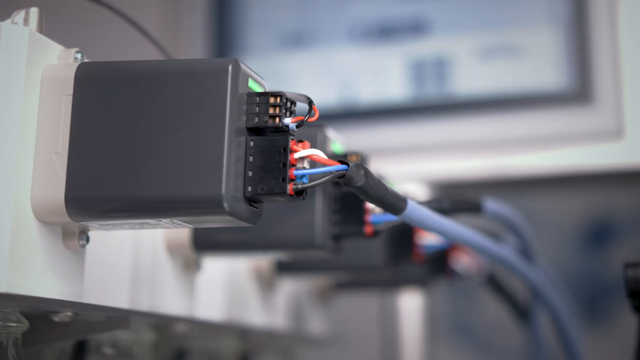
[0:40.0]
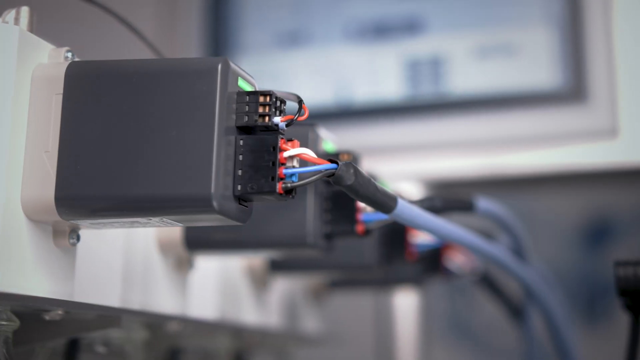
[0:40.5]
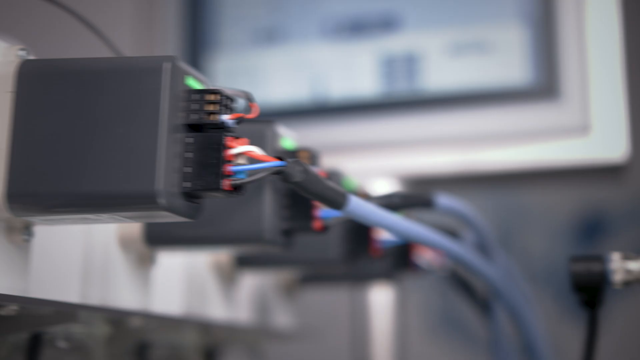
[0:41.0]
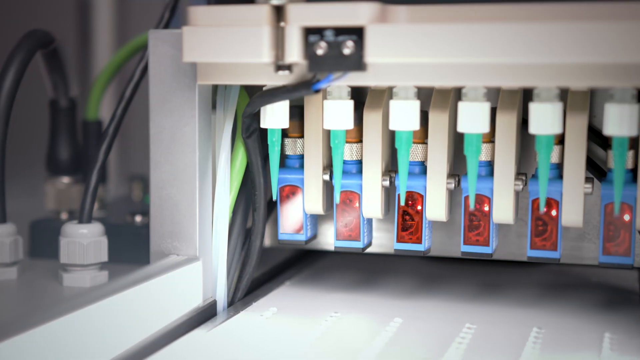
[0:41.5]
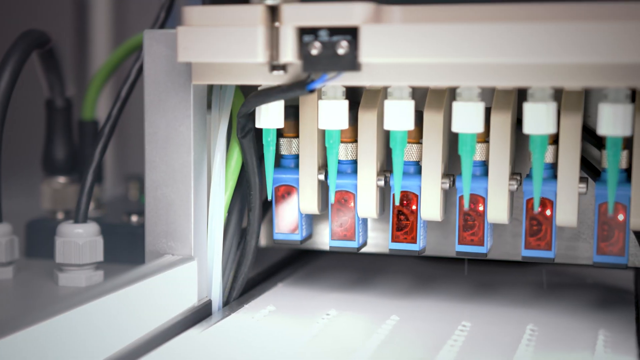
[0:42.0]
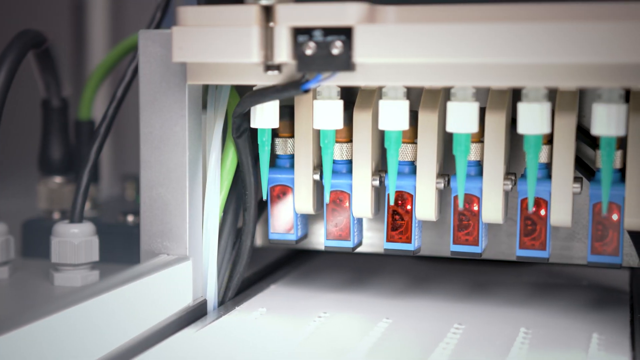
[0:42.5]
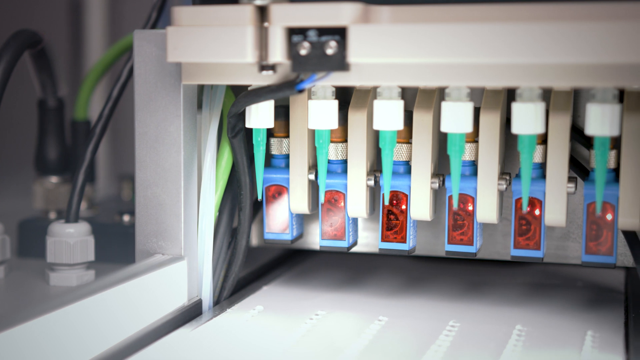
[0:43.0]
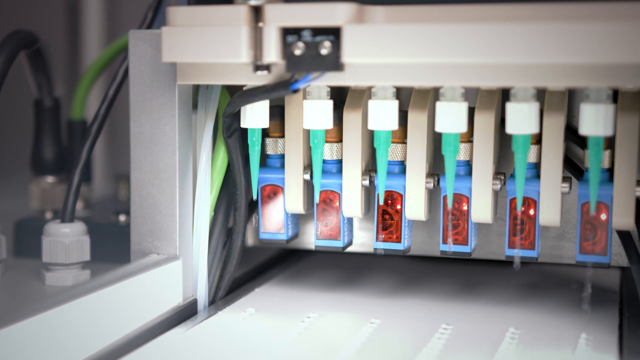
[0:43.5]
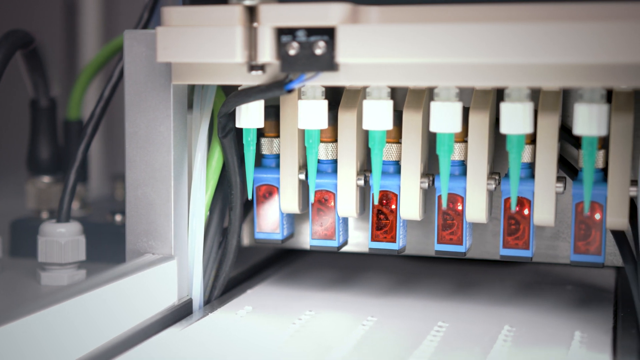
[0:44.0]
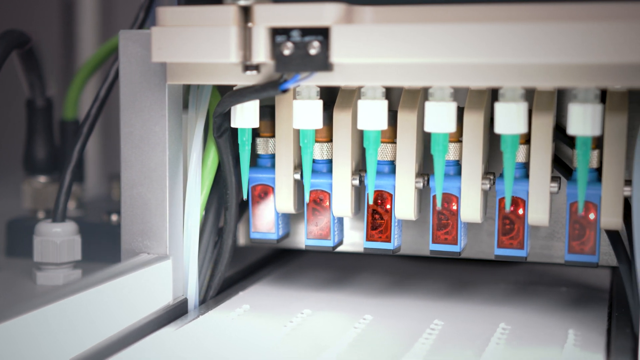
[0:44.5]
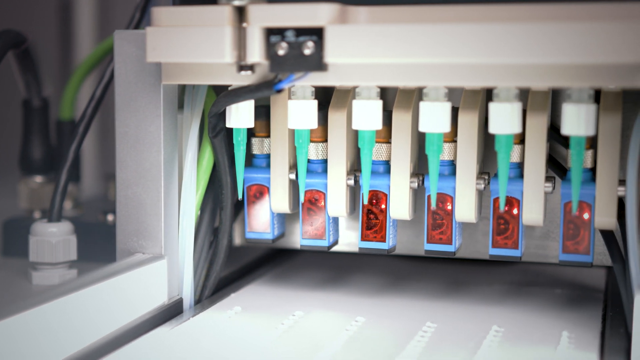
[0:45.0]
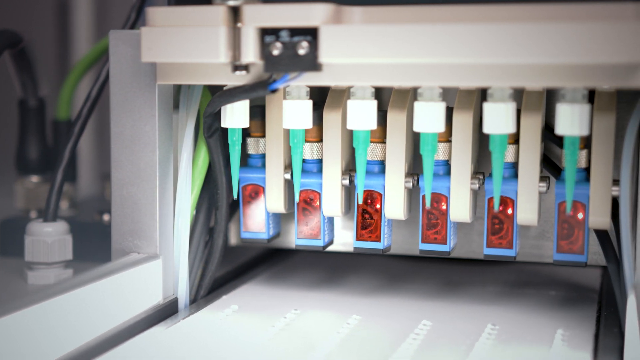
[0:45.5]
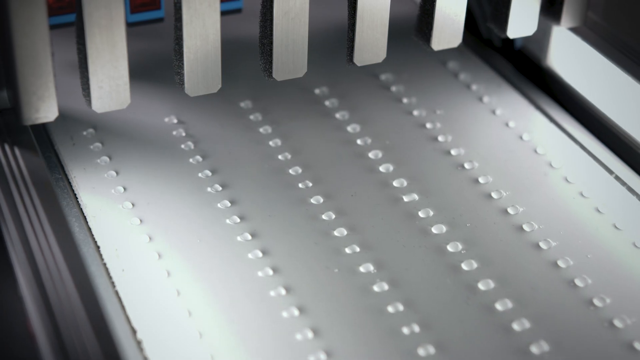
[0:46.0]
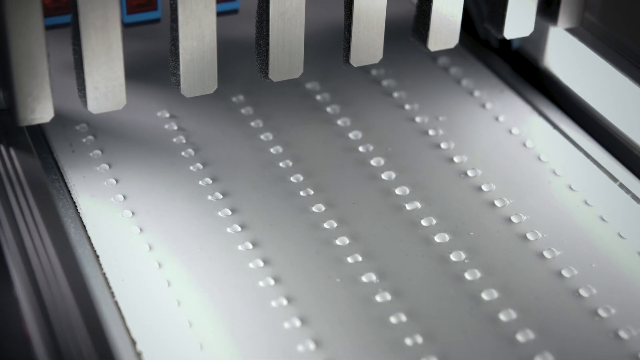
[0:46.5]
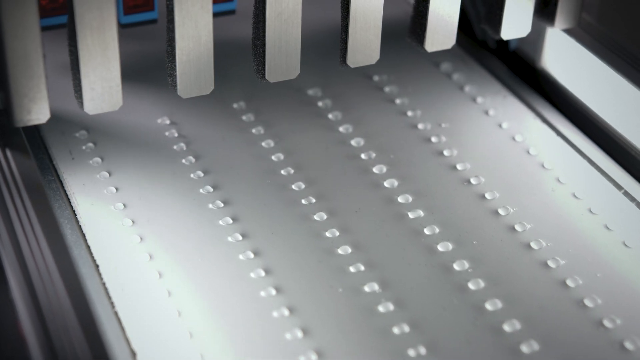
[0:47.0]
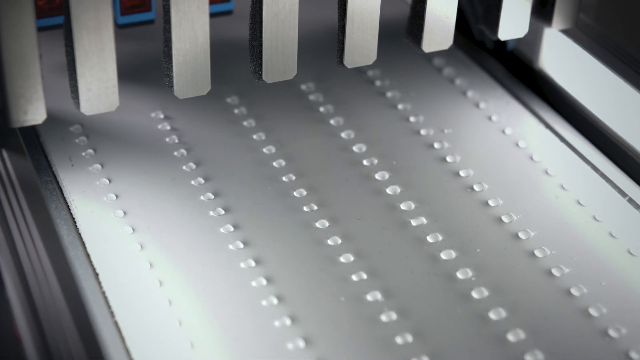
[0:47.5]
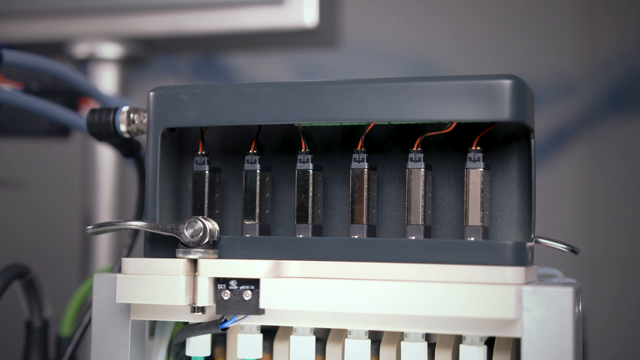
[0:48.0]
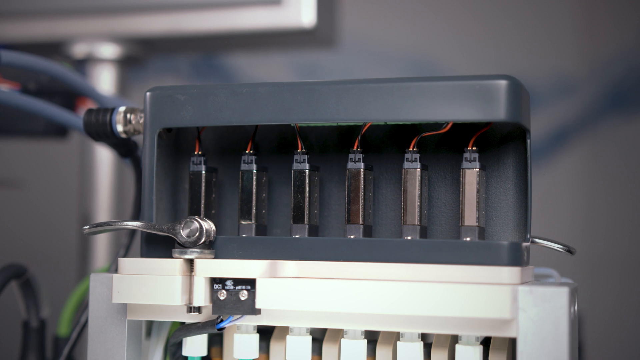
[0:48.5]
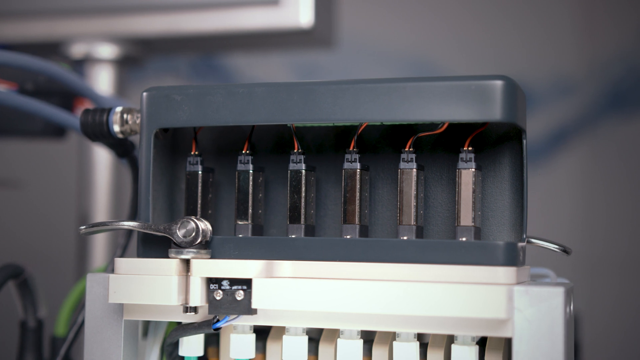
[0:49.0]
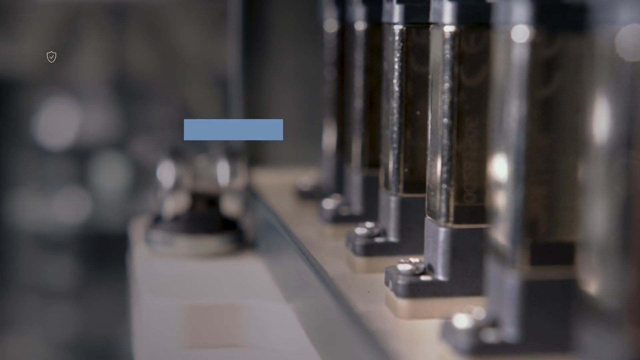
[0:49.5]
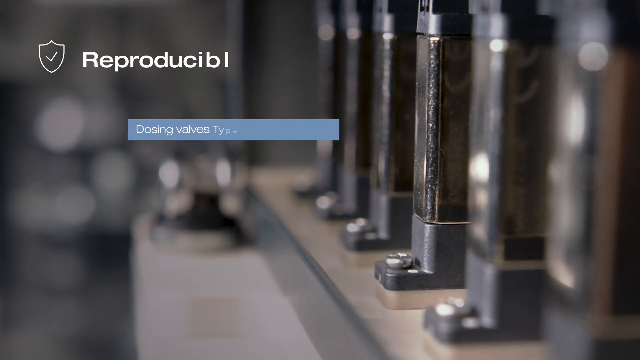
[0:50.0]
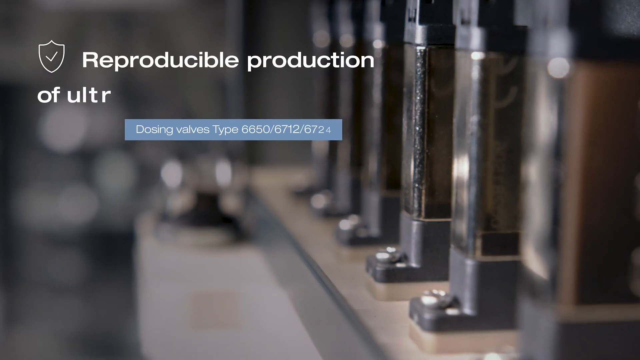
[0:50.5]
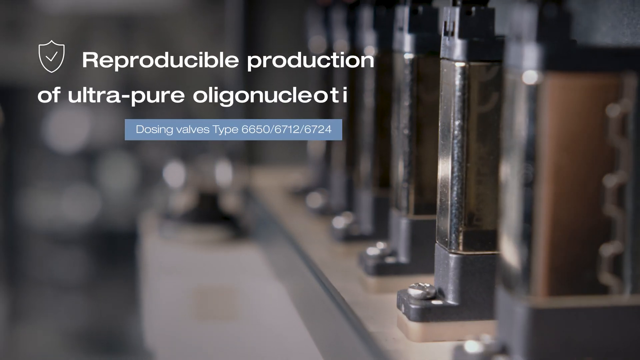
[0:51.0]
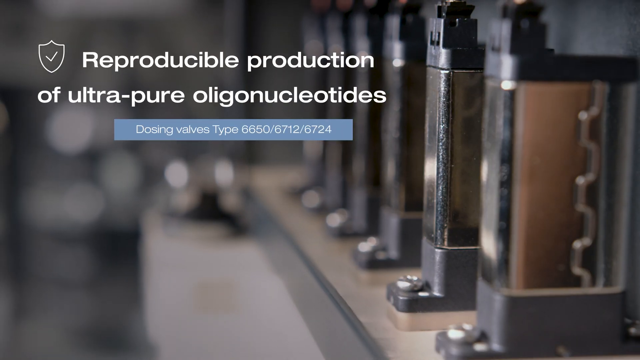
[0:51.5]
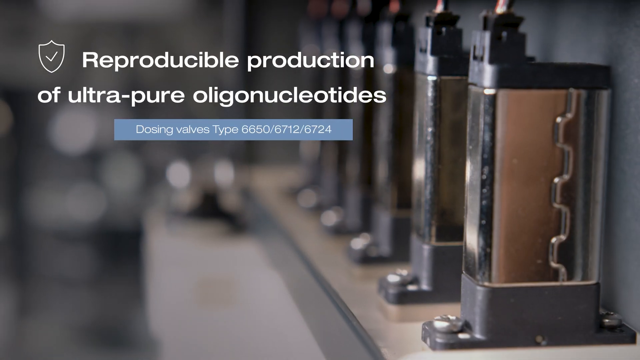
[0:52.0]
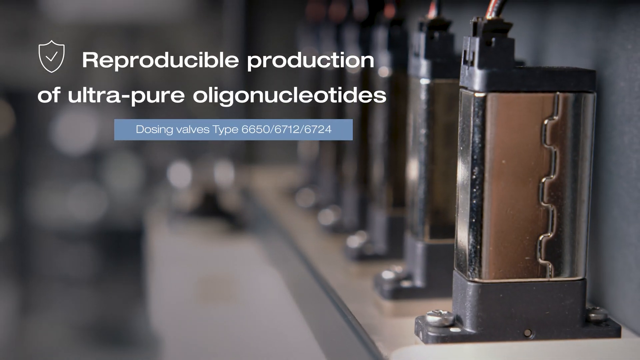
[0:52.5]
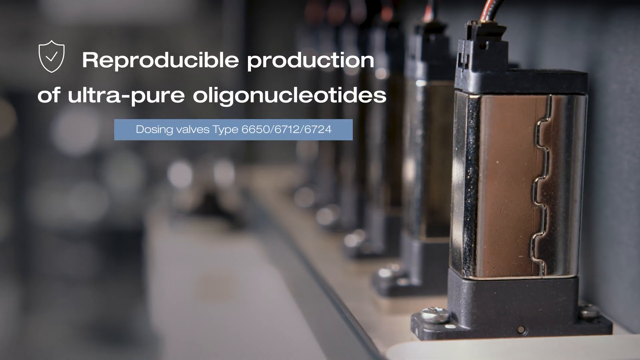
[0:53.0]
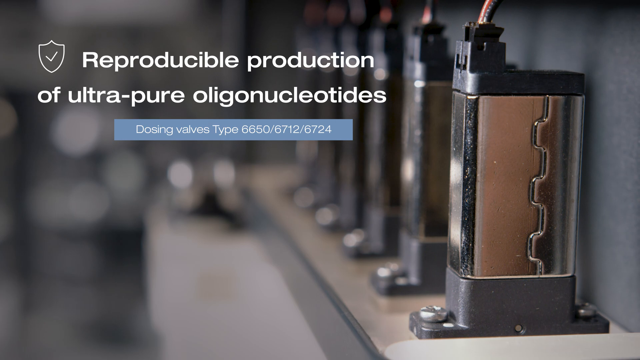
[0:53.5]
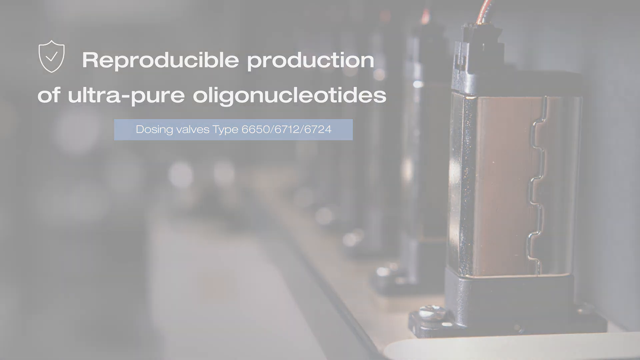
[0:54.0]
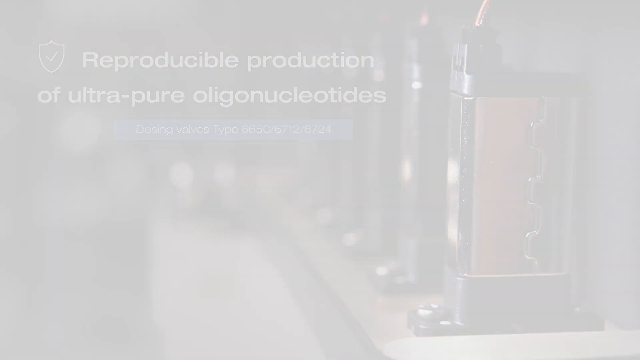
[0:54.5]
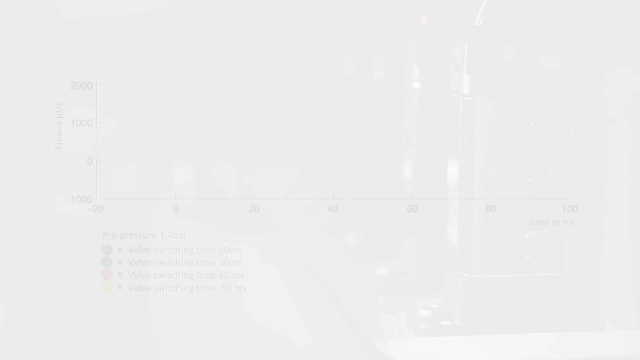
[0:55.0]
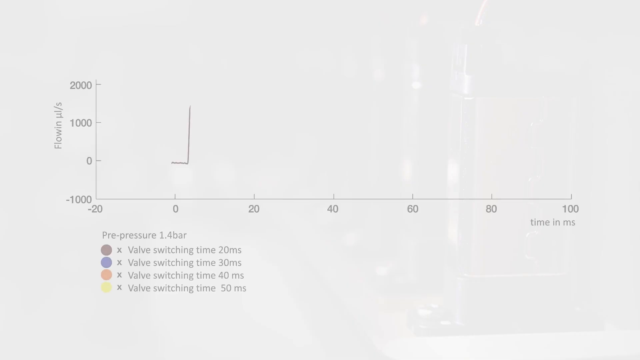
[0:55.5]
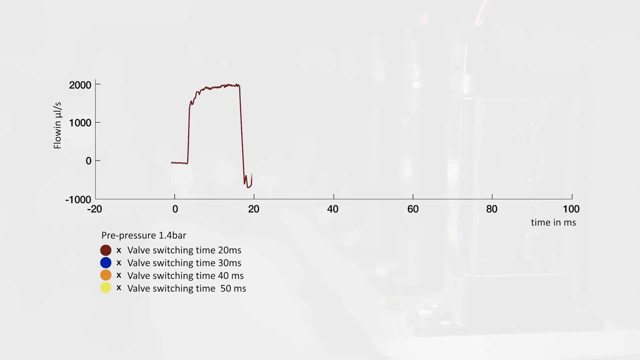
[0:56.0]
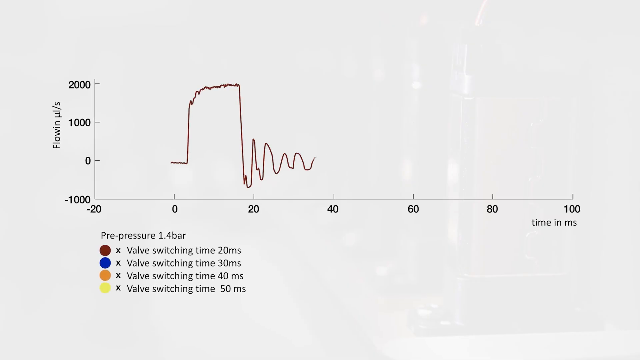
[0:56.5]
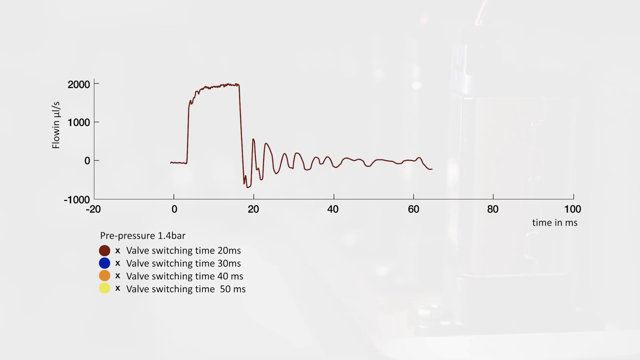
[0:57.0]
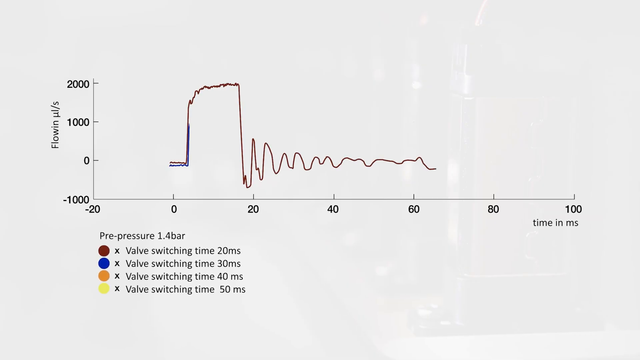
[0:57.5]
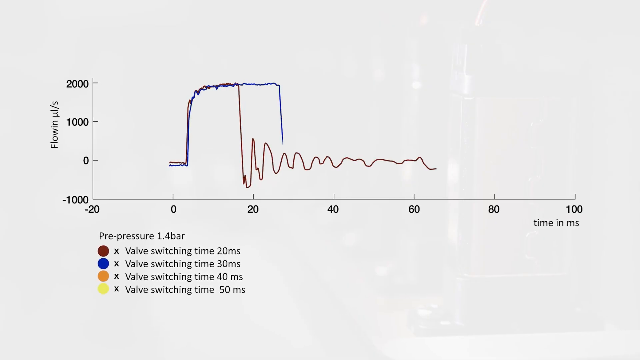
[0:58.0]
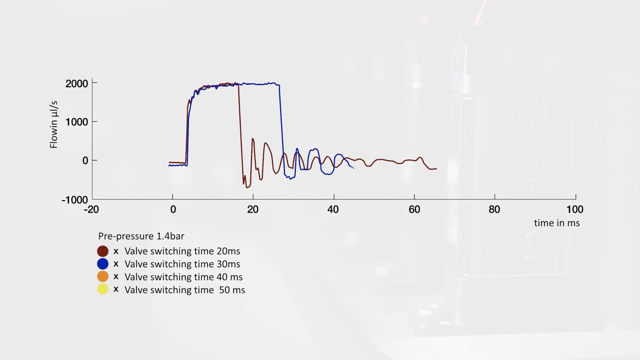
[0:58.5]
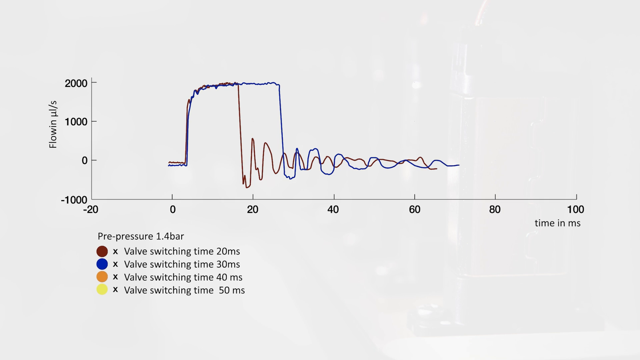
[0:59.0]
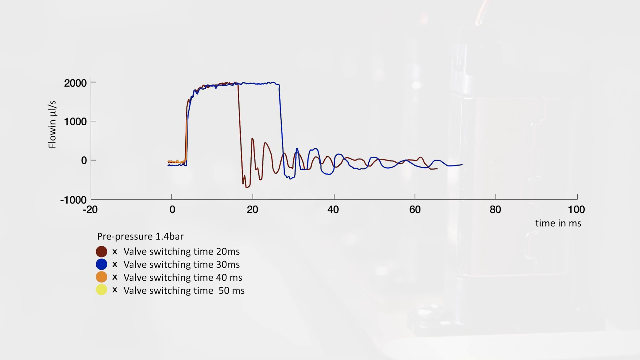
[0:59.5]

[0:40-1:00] A computerized device, used for DNA or some sort of testing, has lots of little wires, and little containers squirt out dots of the testing fluid. The text reads "reproducible production of ultra pure oligonucleotides," with smaller print below reading "dosing valves type 6650/6712/6724." A graph then comes up on the screen showing flow in units: the left axis goes from zero up to a thousand and then two thousand, and the bottom axis runs from negative 20 to zero, then 20, 40, 60, 80 and 100, labeled "time in ms." The legend shows a pre-pressure of 1.4 bar, and the chart uses brown, blue, orange and yellow. The chart is generated as the video plays.